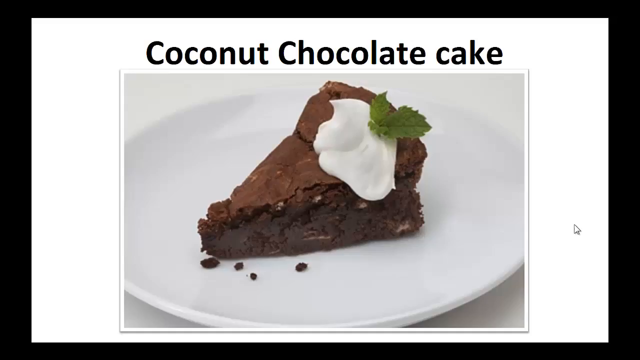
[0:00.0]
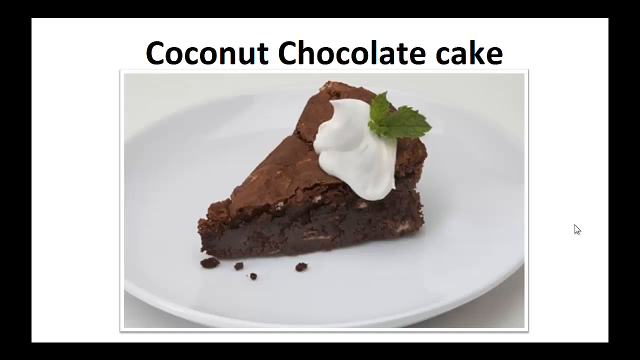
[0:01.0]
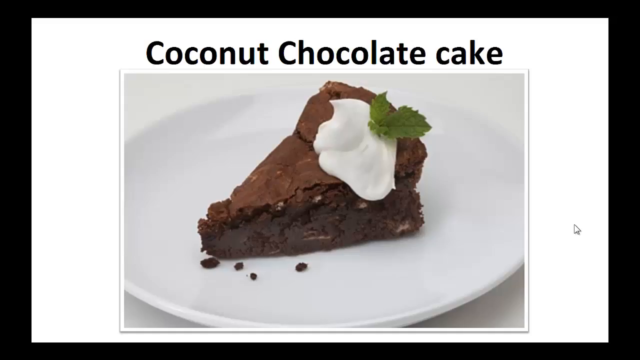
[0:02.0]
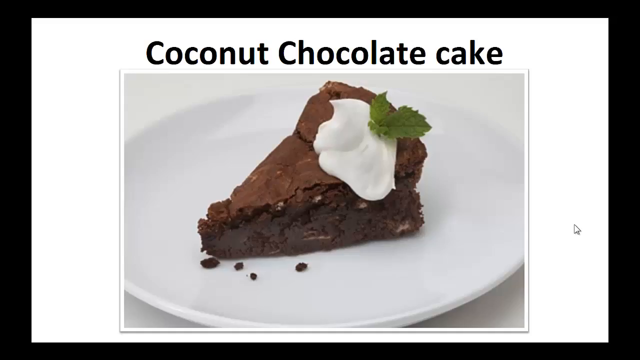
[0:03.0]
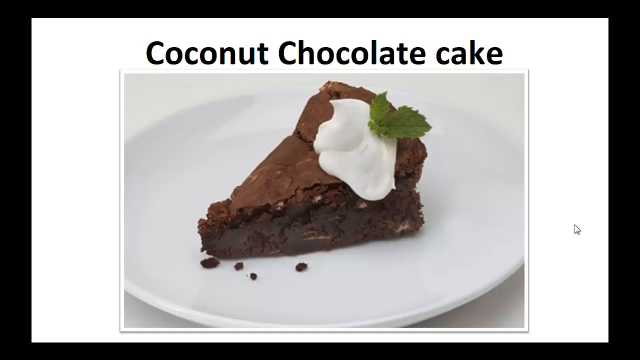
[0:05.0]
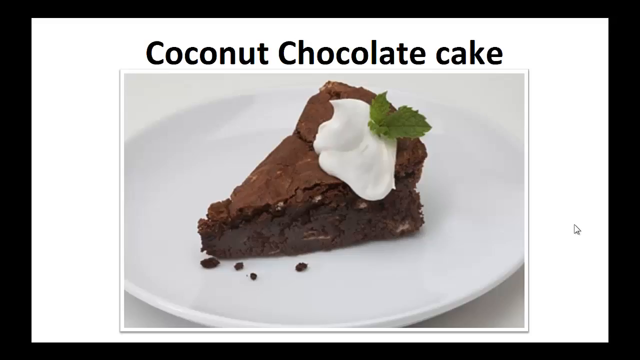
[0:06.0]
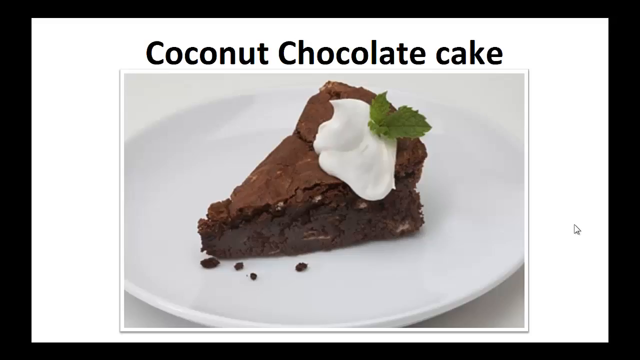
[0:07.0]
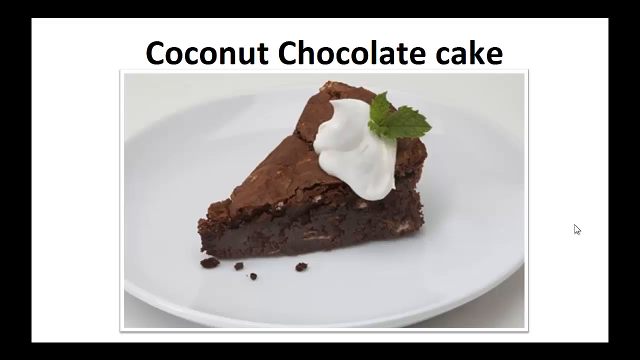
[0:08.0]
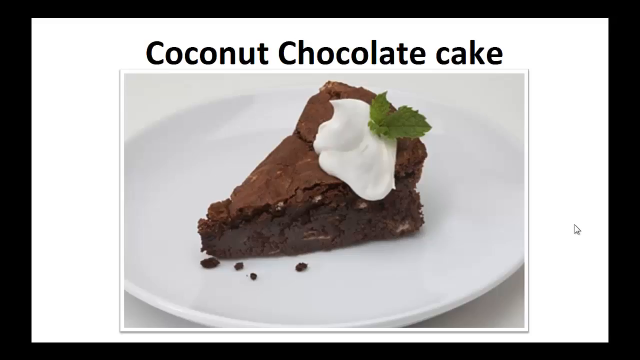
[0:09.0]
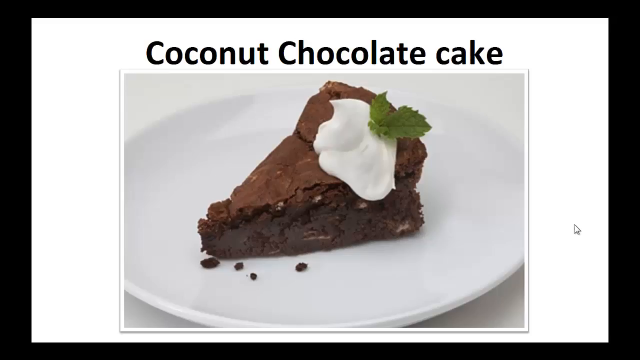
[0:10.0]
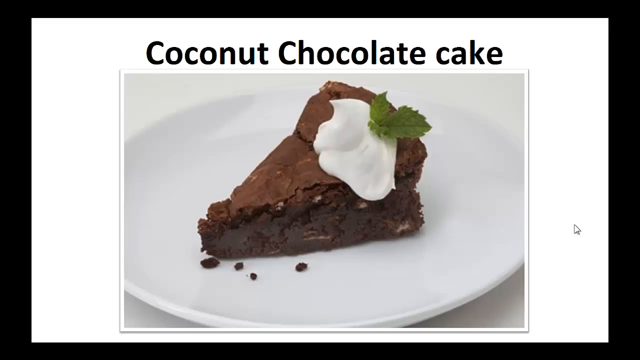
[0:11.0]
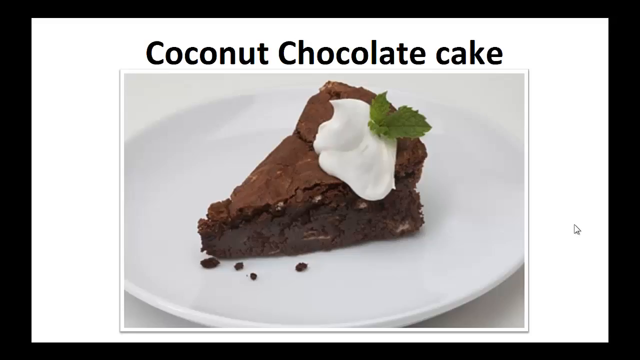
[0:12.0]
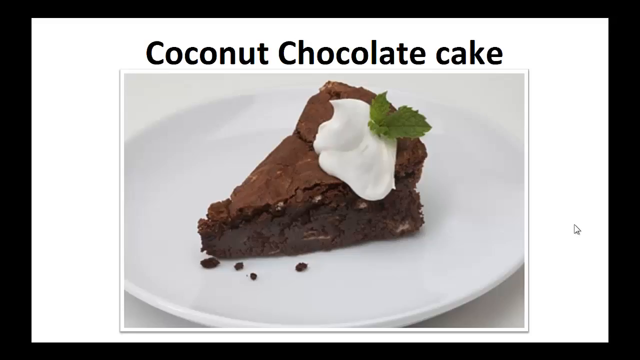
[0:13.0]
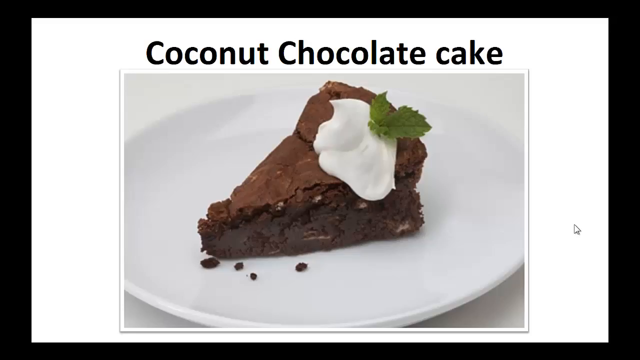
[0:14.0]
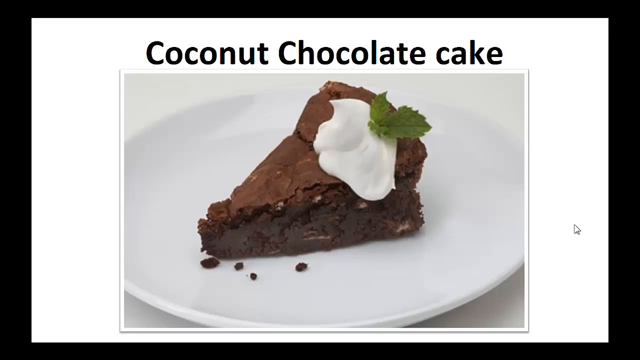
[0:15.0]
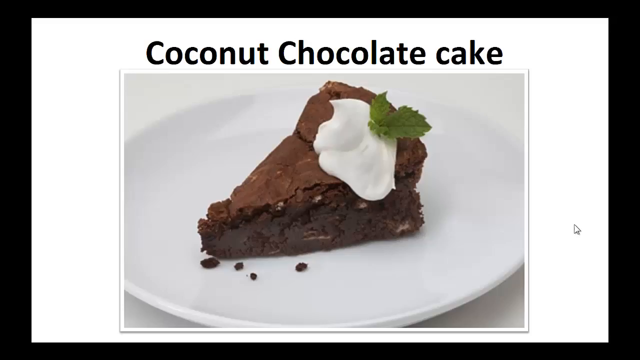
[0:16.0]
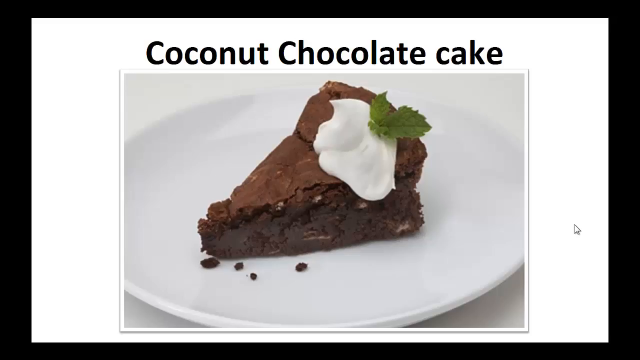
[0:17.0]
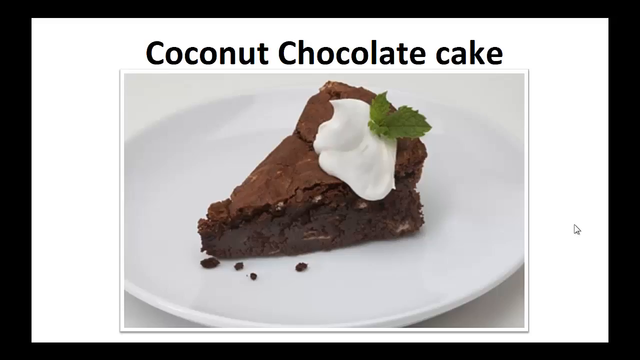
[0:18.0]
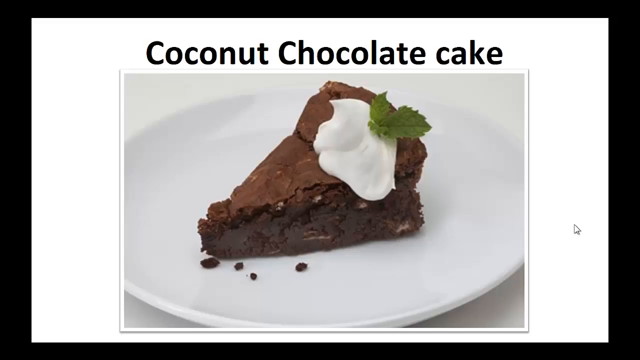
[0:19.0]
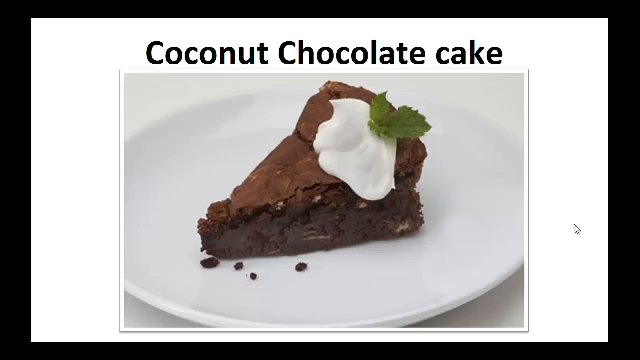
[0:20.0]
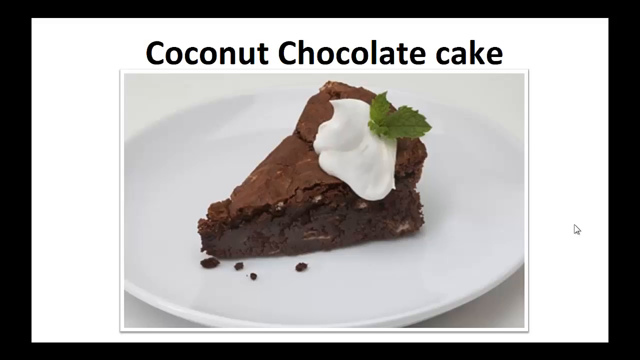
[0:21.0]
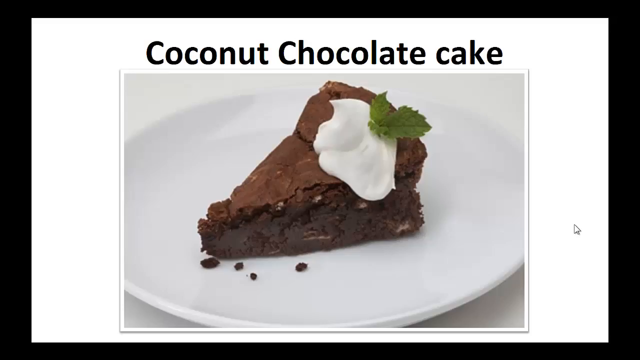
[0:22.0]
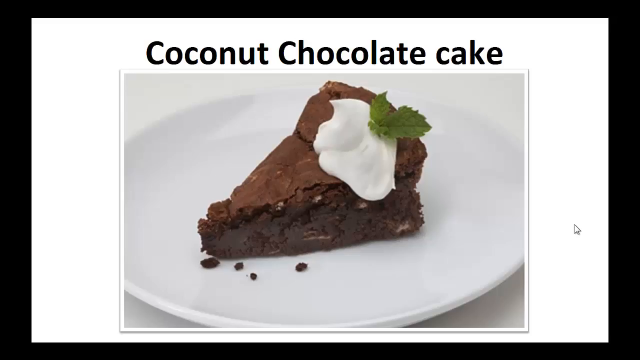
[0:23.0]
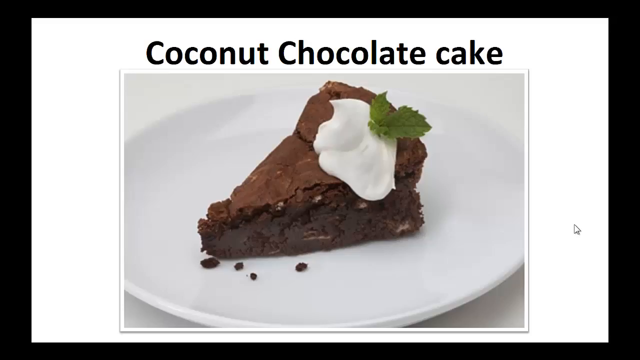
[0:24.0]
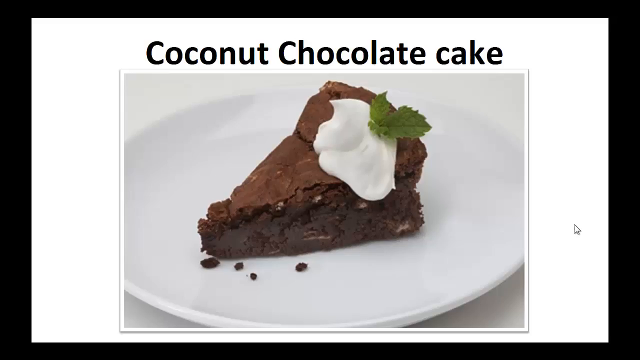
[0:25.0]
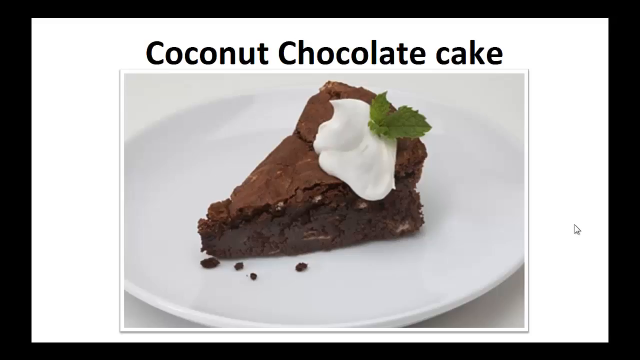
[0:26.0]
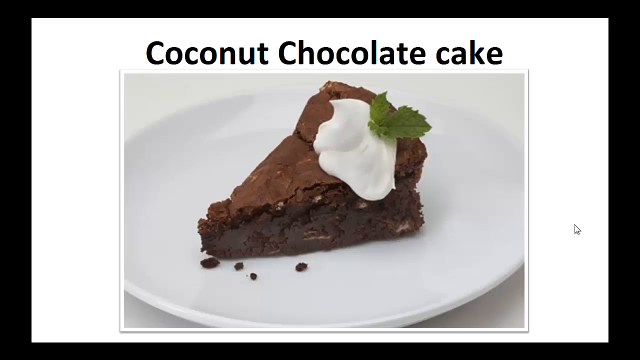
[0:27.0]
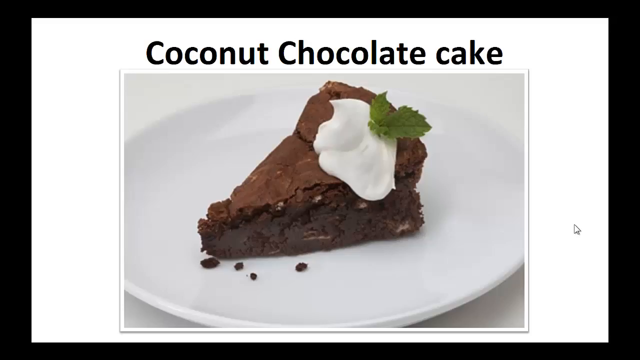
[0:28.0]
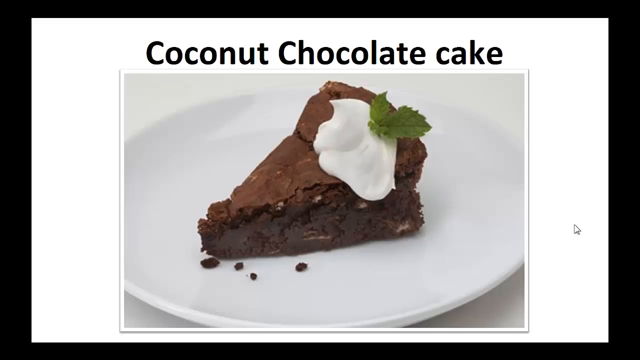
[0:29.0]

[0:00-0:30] A brown cake, apparently on a plate, appears against a white background. The plate is white. On top of the cake there is white cream and something like a green leaf, apparently mint, and the cake looks like a chocolate cake. Text written in an easy-to-read black font identifies it as a coconut cake. There is no person, only the cake. The picture looks cropped, and a mouse pointer, something like an arrow, is visible at the side, suggesting it is shown on a computer.